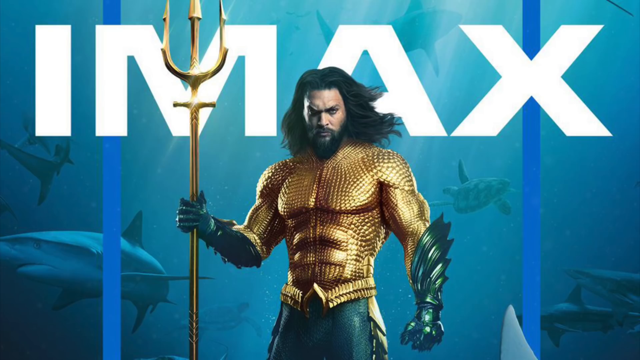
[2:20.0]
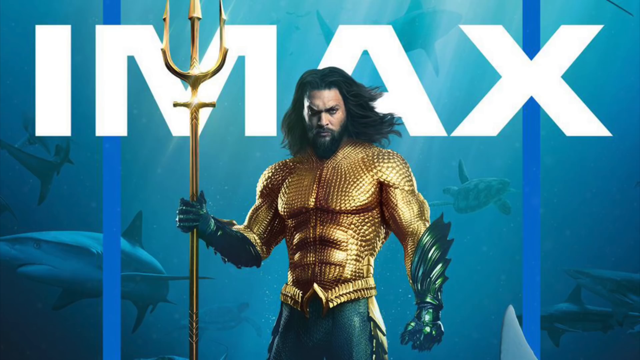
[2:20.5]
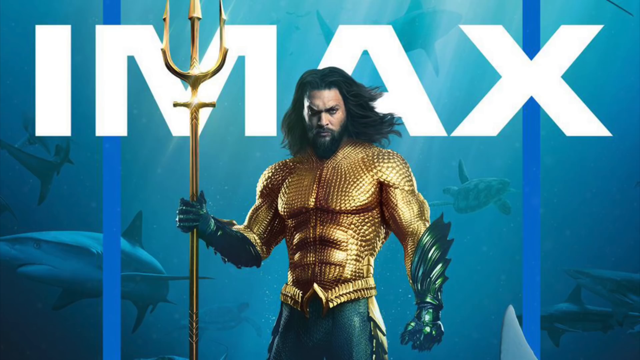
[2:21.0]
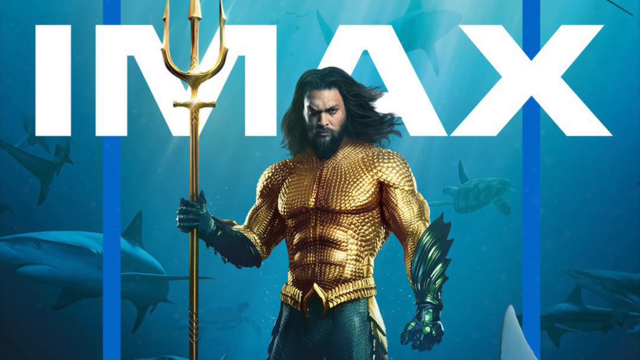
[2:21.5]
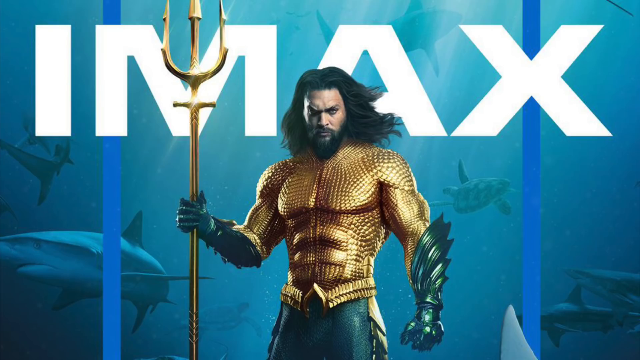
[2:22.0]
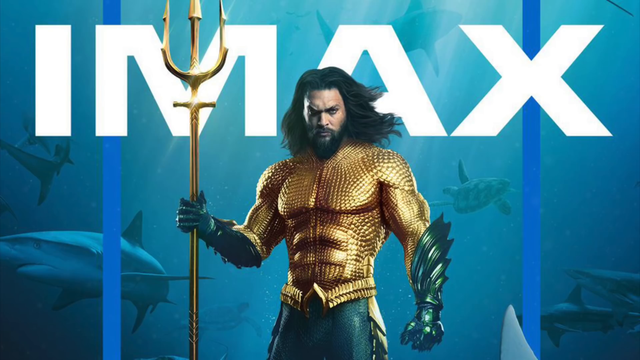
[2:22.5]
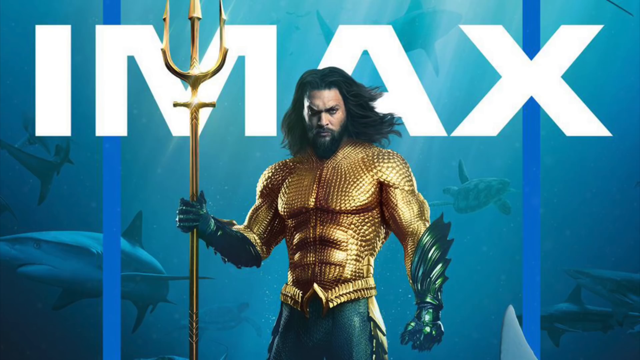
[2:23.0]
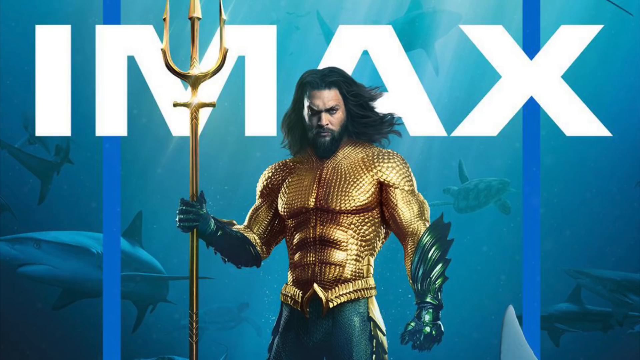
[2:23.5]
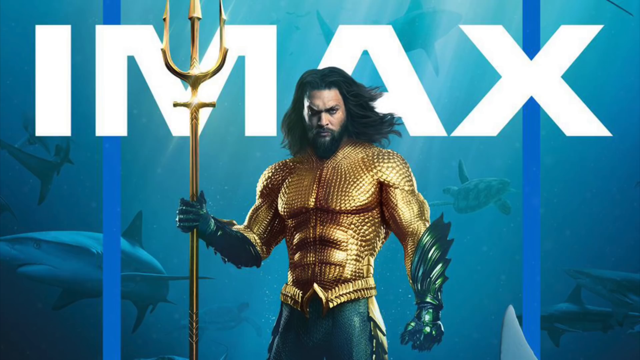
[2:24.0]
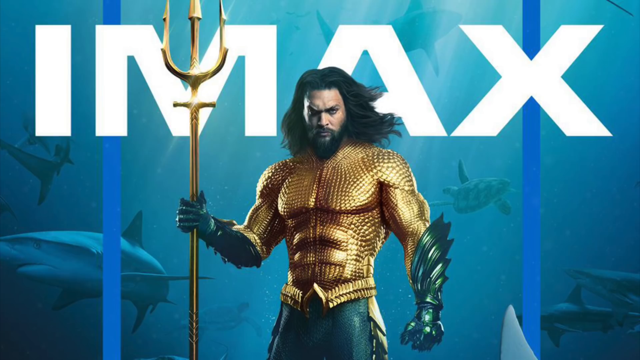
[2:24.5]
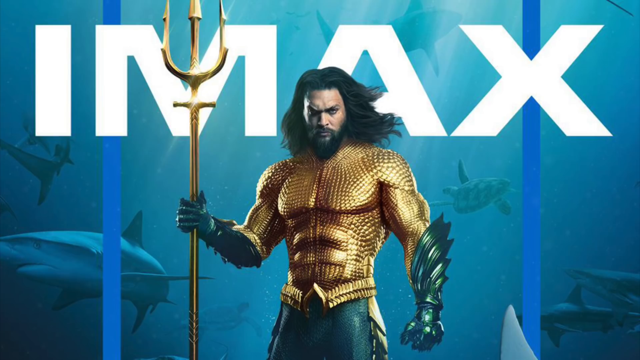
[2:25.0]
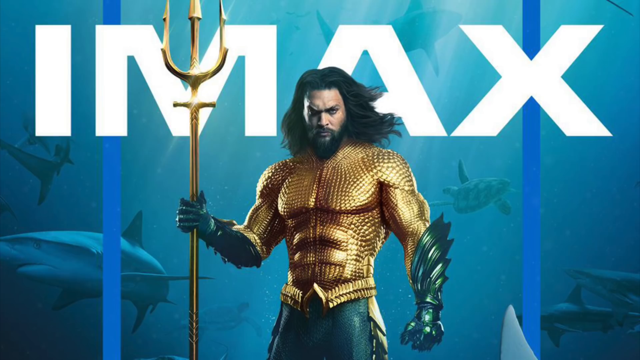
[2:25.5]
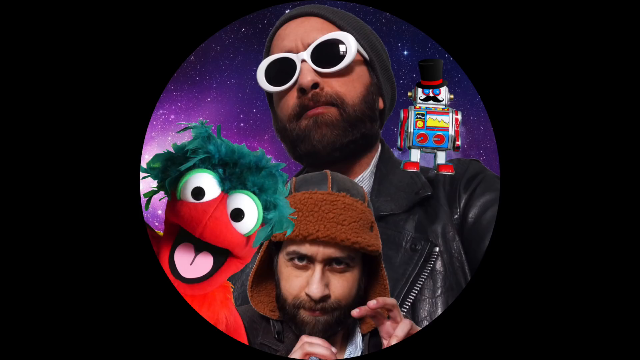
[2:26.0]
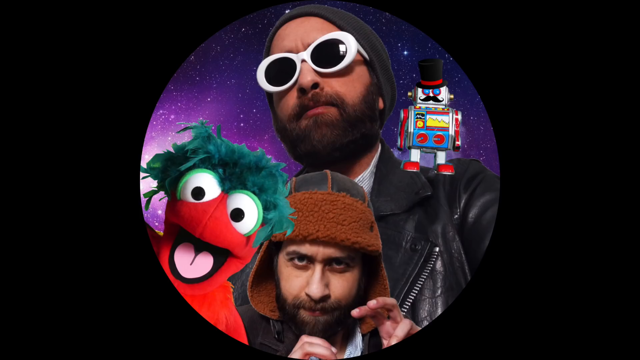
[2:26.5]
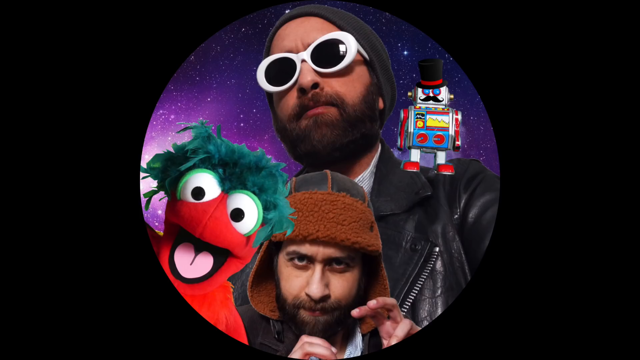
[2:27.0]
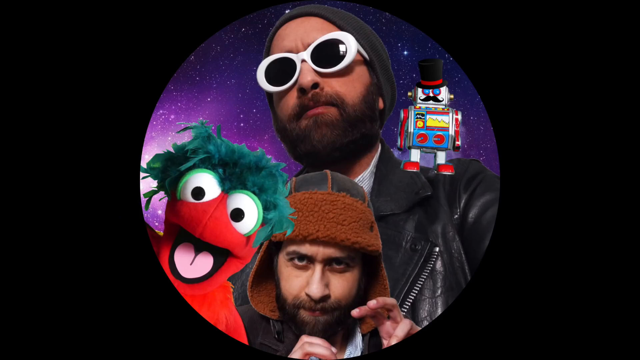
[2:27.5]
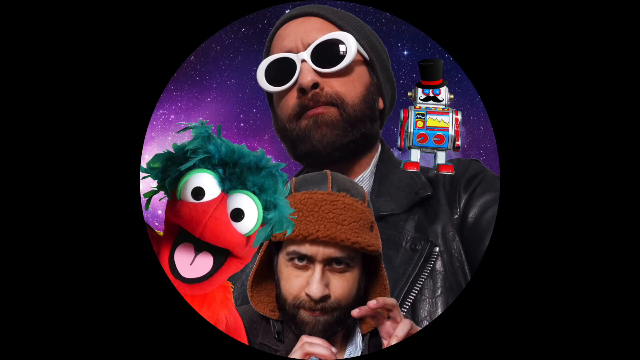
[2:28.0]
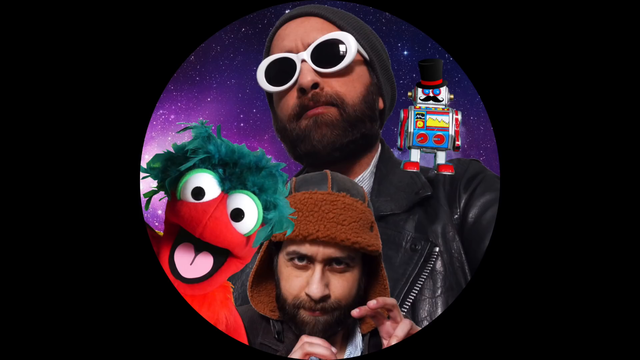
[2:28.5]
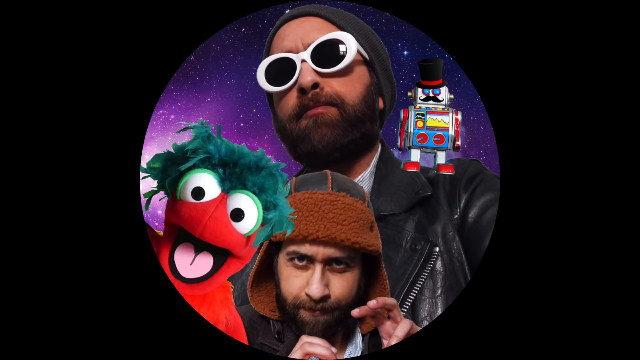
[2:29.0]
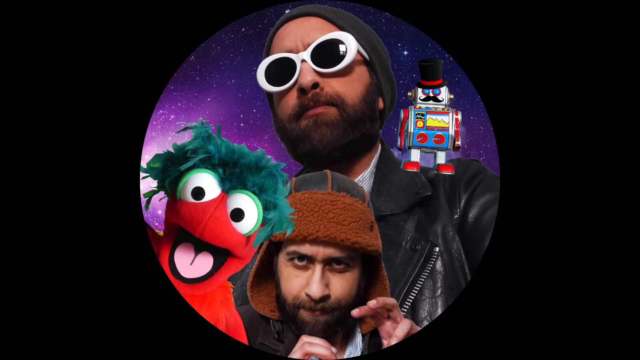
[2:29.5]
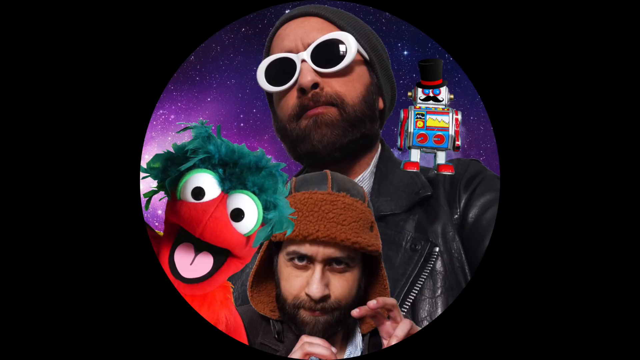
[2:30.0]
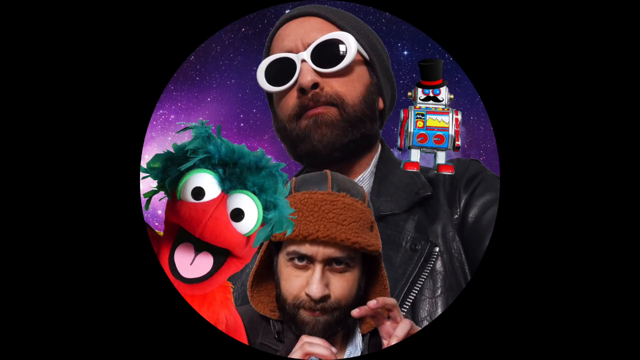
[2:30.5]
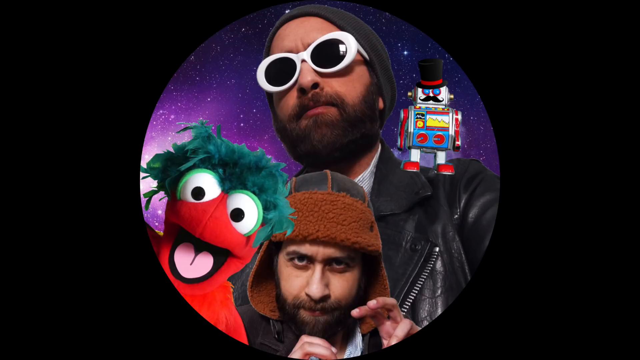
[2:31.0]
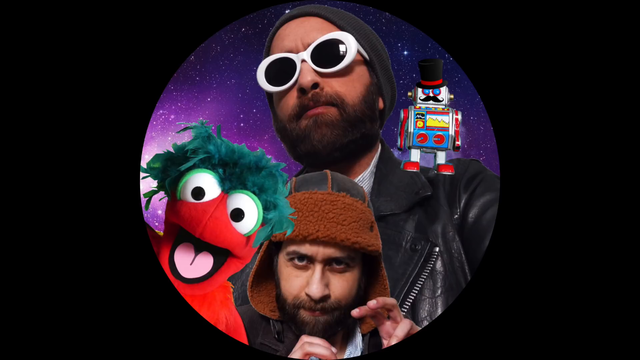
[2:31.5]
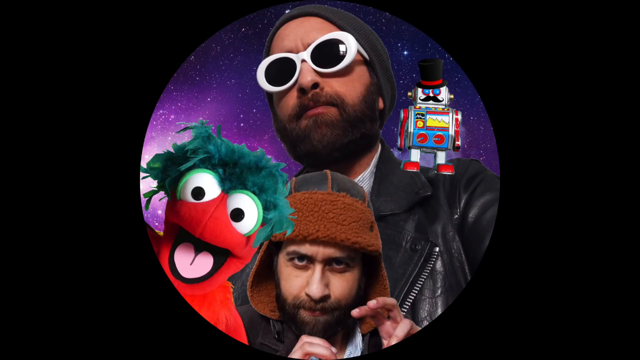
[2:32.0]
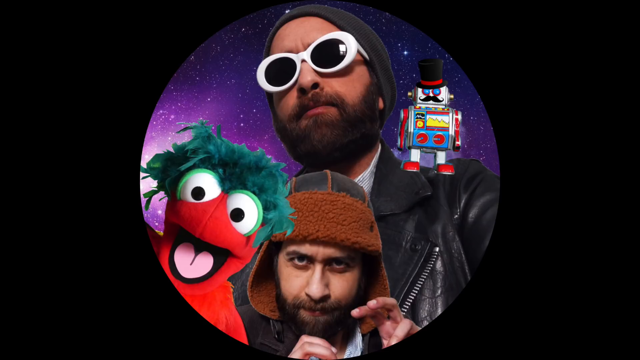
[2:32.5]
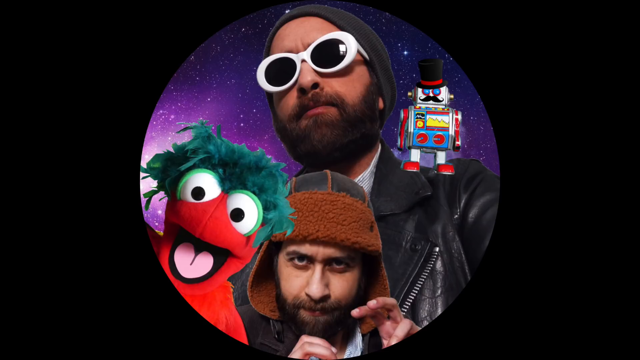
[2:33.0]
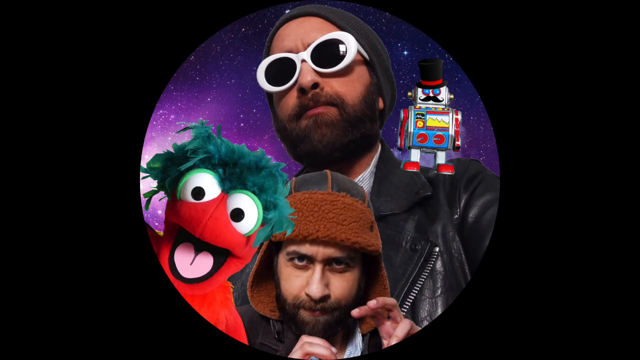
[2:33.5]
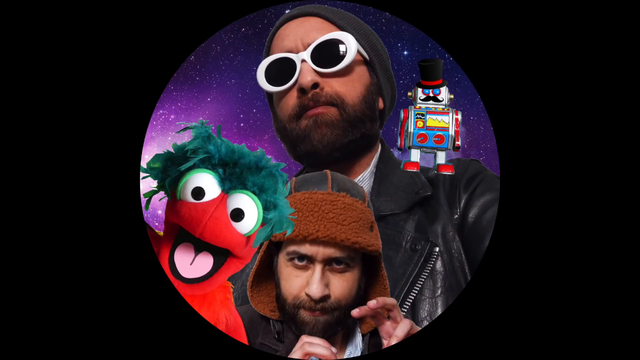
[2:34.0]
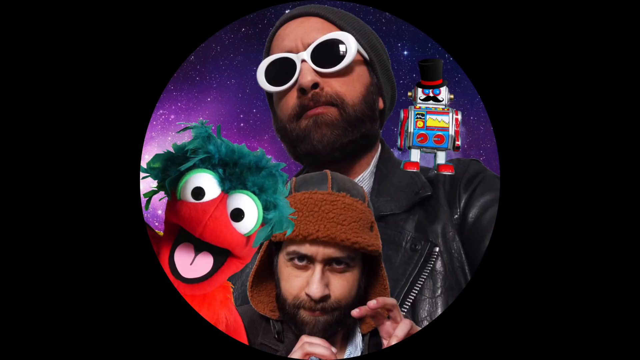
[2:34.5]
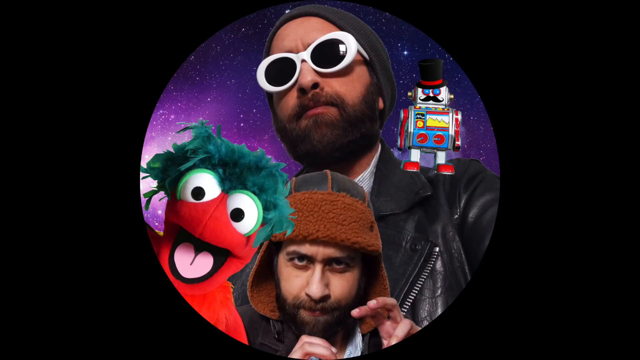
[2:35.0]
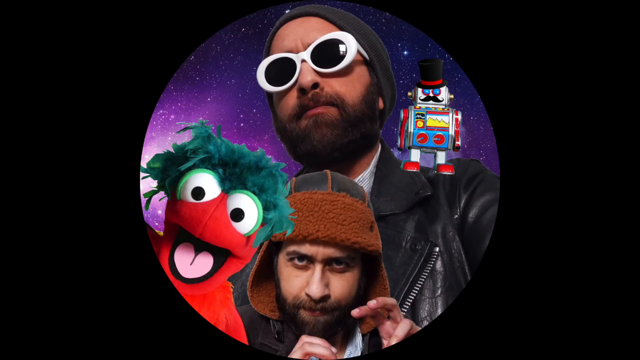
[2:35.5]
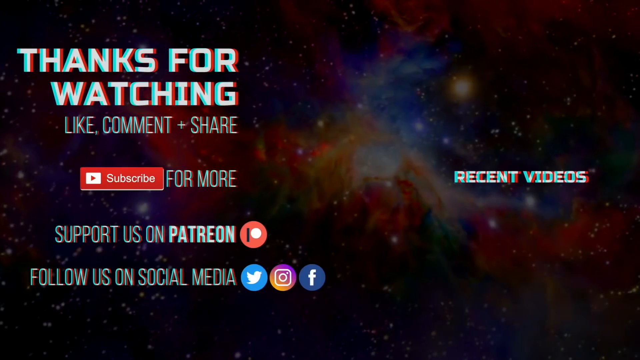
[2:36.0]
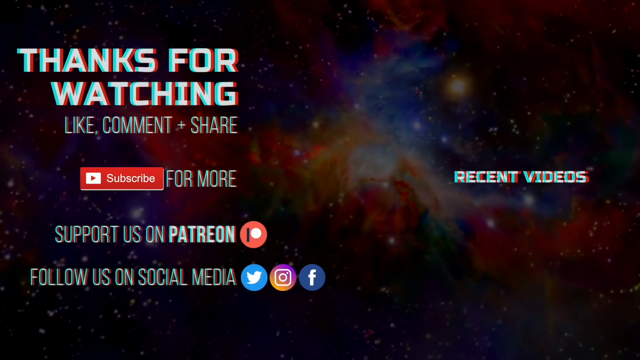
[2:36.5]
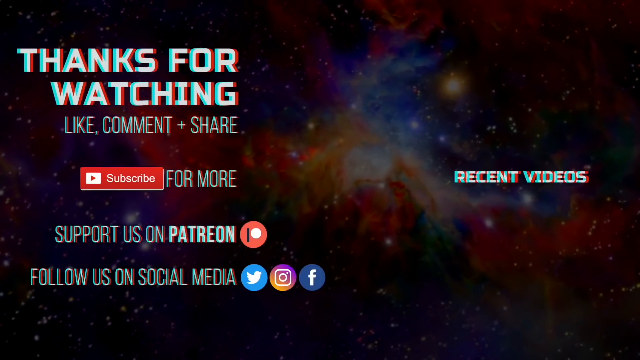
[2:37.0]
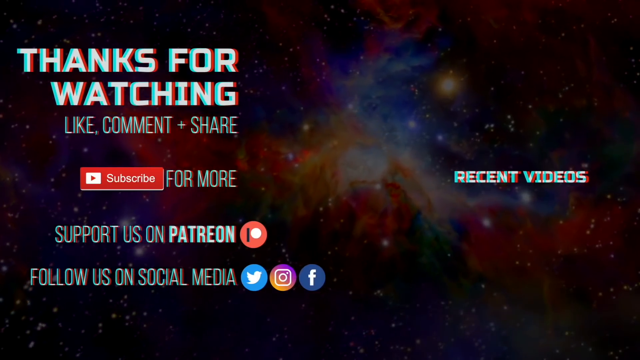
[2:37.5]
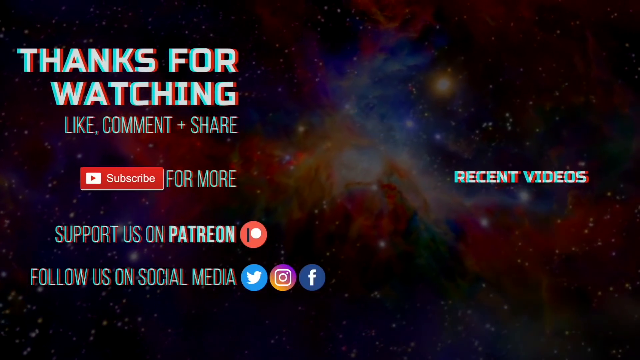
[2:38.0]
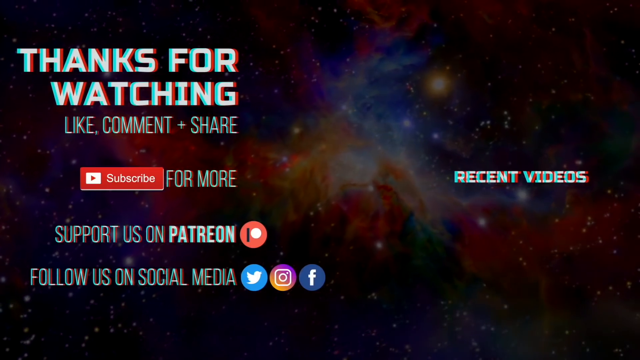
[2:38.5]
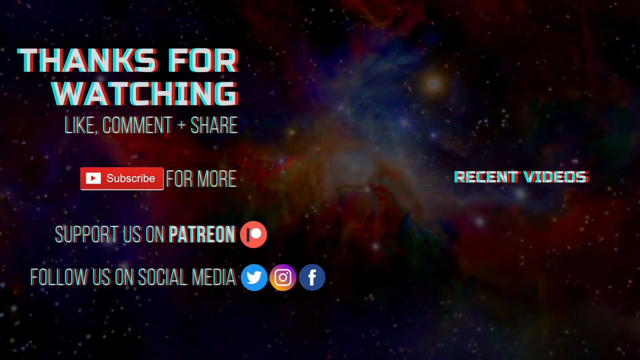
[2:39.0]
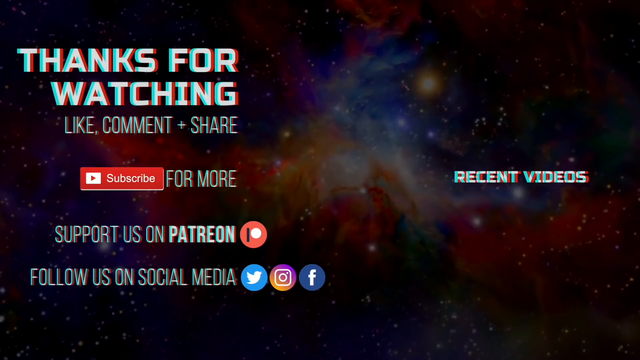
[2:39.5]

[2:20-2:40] Jason Momoa appears dressed as Aquaman, holding a trident in his right arm. He wears gold armor, a golden-turquoise type belt, and turquoise gloves, and has long hair and facial hair. Behind him are multiple sharks, probably four or five, and behind them the word IMAX, along with two very distinct blue lines that do not match the ocean scenery. The video then changes to an image of unrelated people in a circle. One is a puppet figure with teal hair and red skin. Another is a man with a winter hat and facial hair. Another is a man with facial hair, white sunglasses, a toque, and a leather jacket, with a robot wearing a mustache and a top hat on his shoulder.